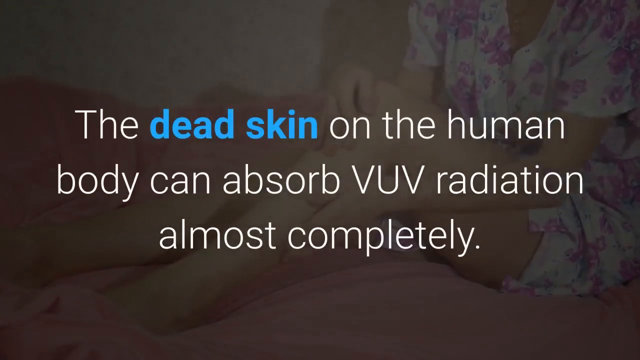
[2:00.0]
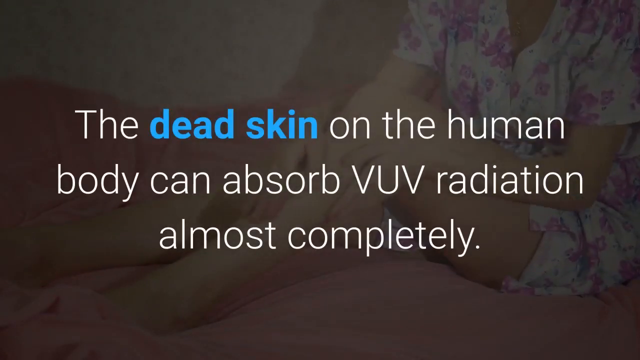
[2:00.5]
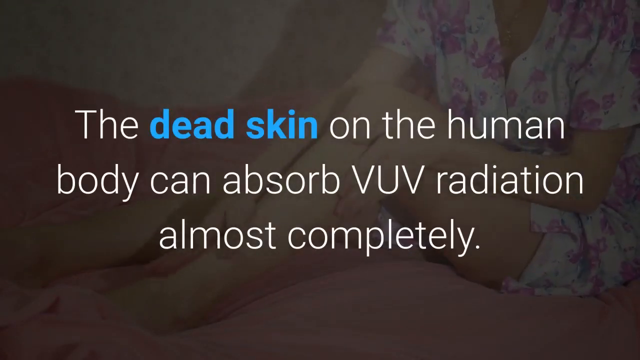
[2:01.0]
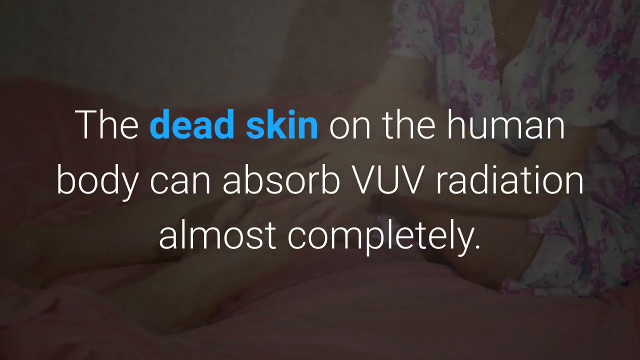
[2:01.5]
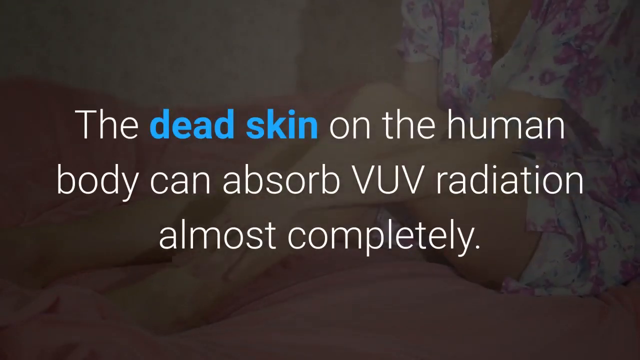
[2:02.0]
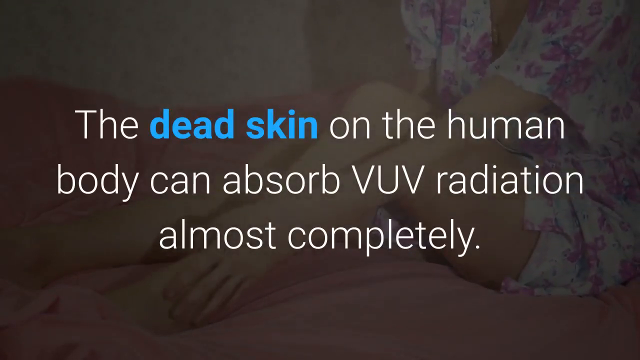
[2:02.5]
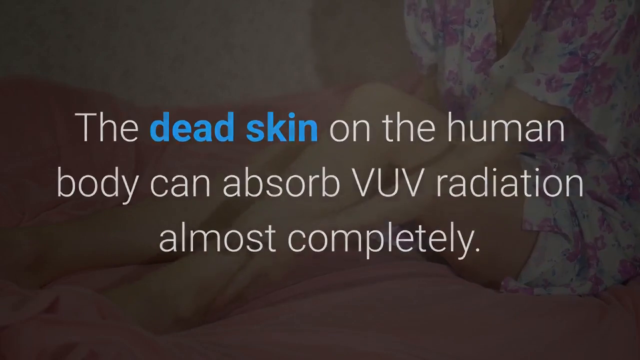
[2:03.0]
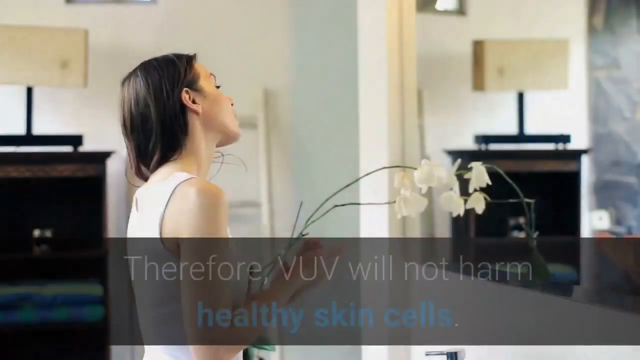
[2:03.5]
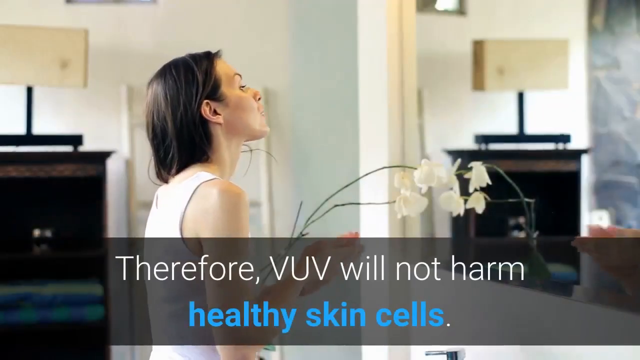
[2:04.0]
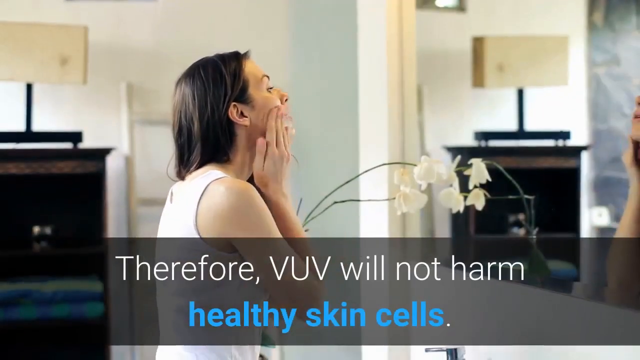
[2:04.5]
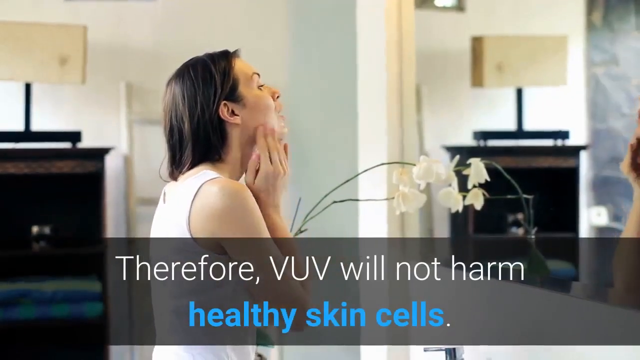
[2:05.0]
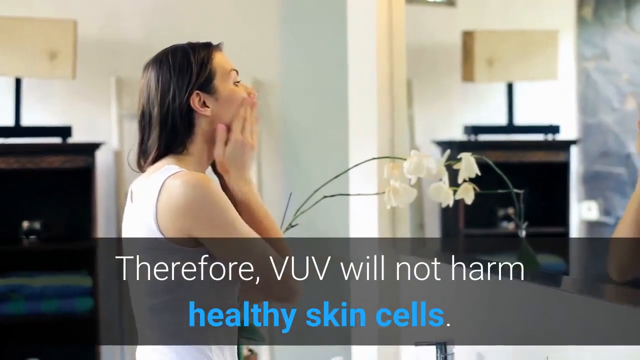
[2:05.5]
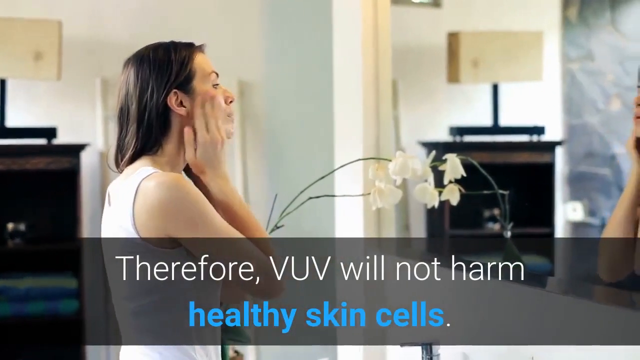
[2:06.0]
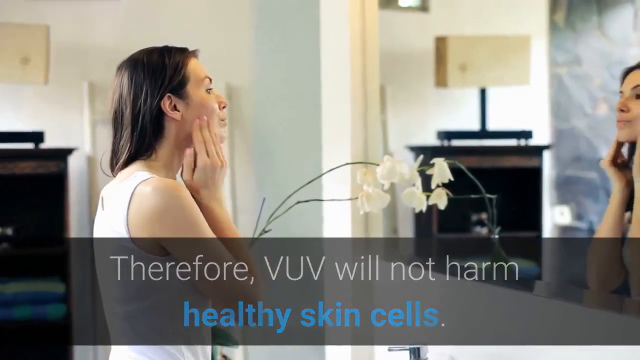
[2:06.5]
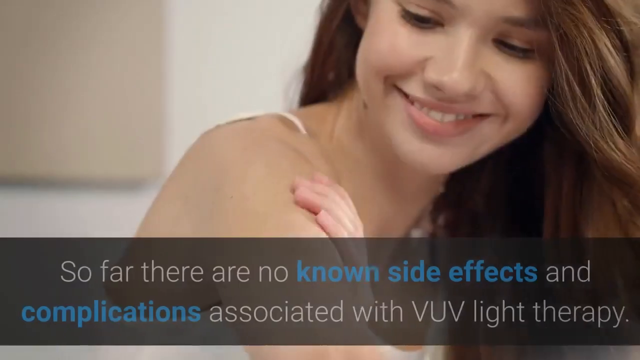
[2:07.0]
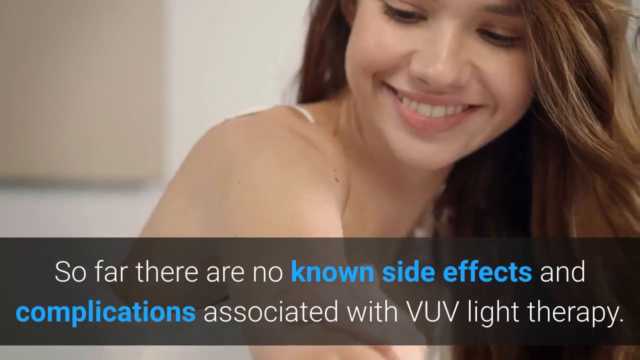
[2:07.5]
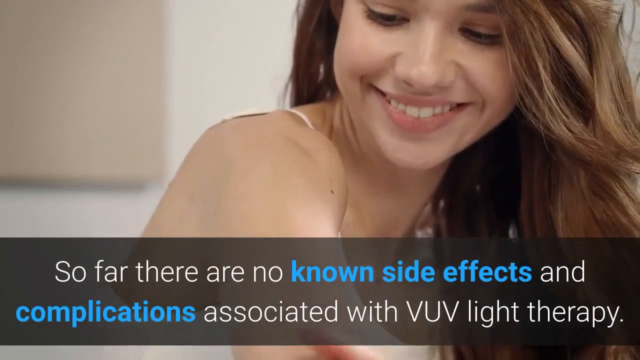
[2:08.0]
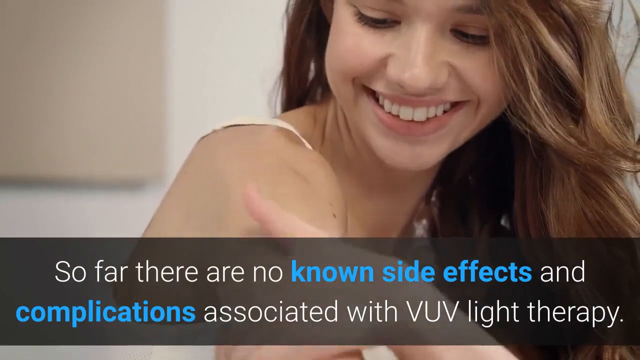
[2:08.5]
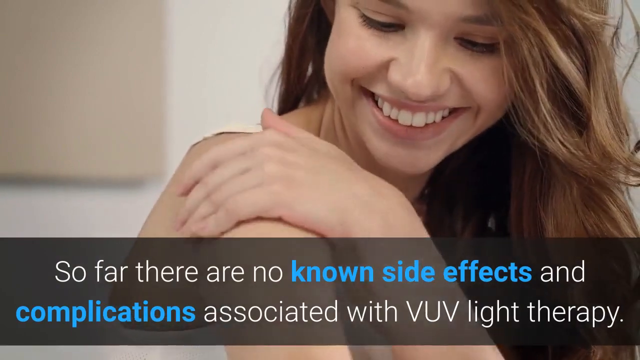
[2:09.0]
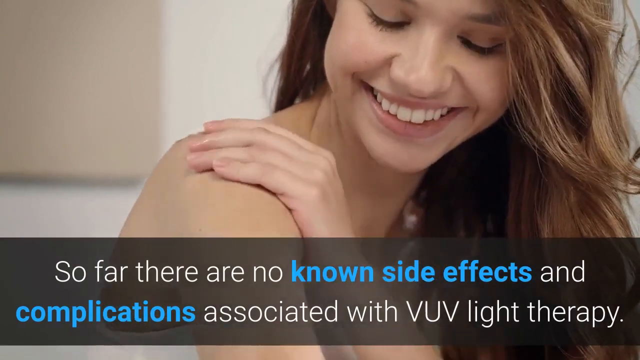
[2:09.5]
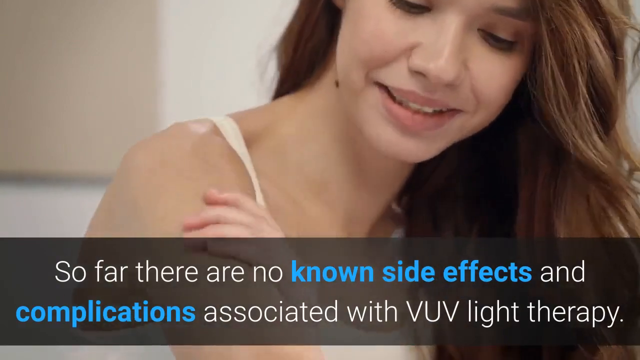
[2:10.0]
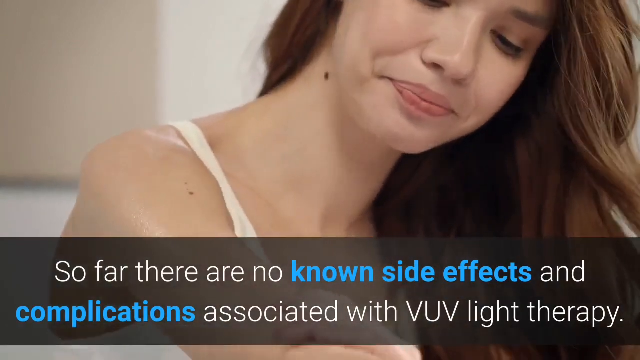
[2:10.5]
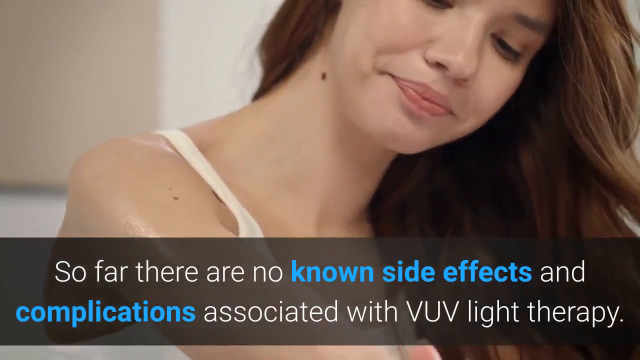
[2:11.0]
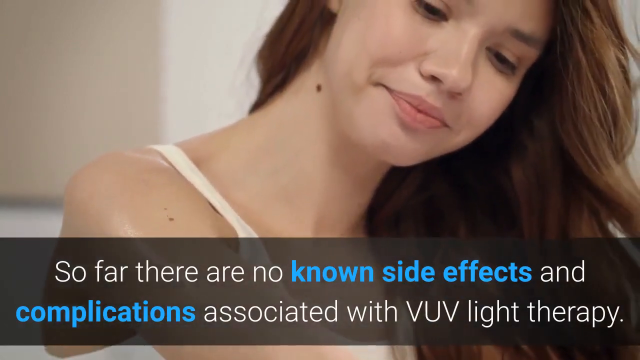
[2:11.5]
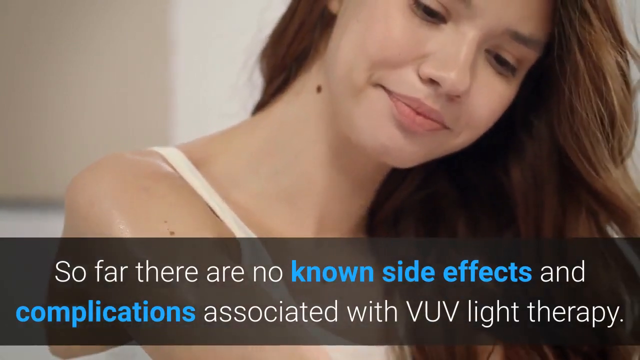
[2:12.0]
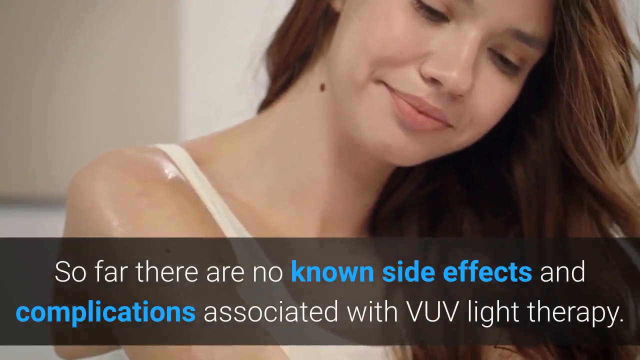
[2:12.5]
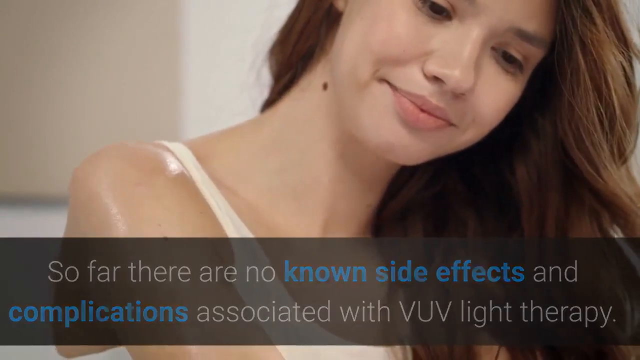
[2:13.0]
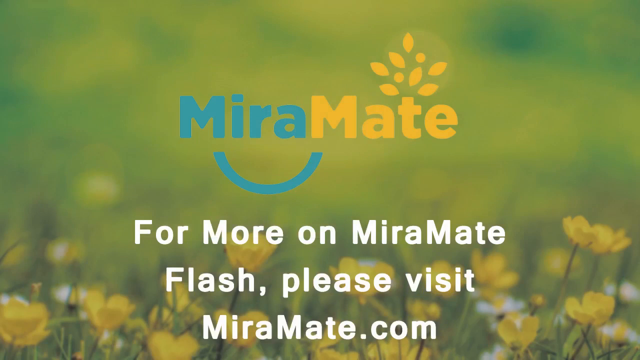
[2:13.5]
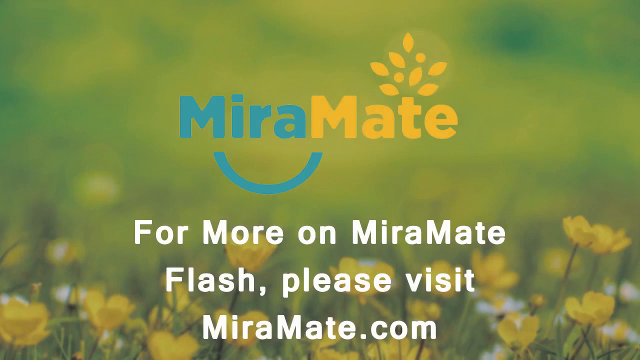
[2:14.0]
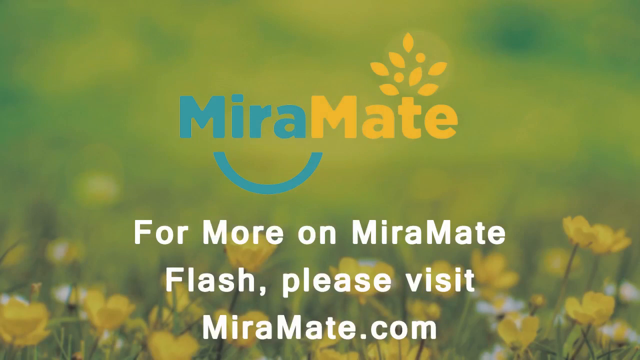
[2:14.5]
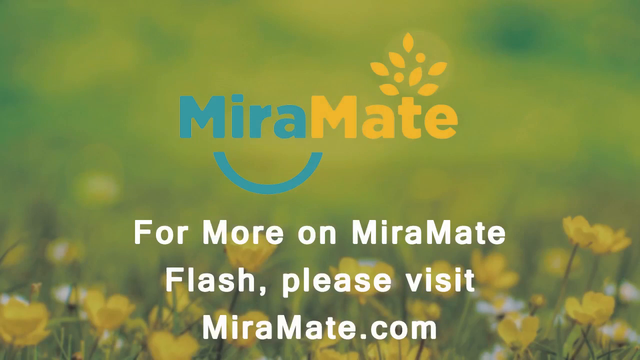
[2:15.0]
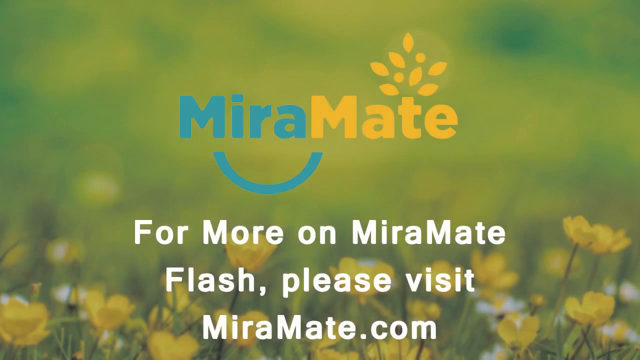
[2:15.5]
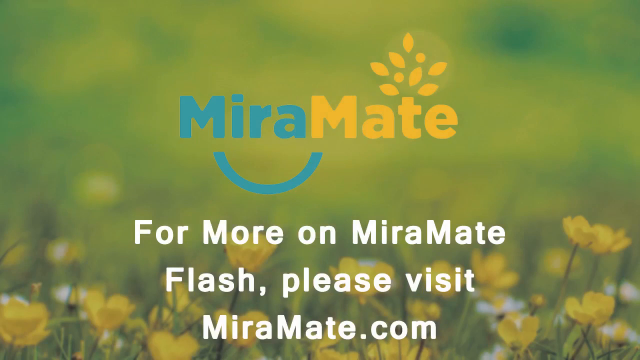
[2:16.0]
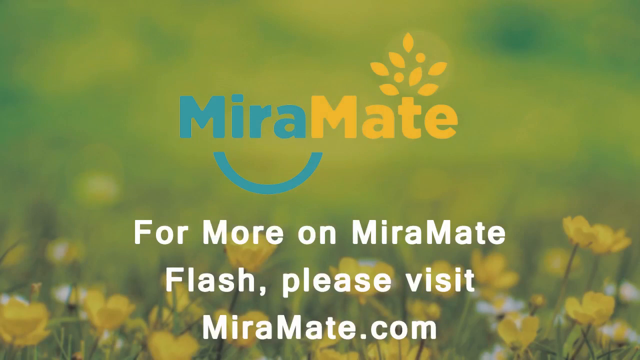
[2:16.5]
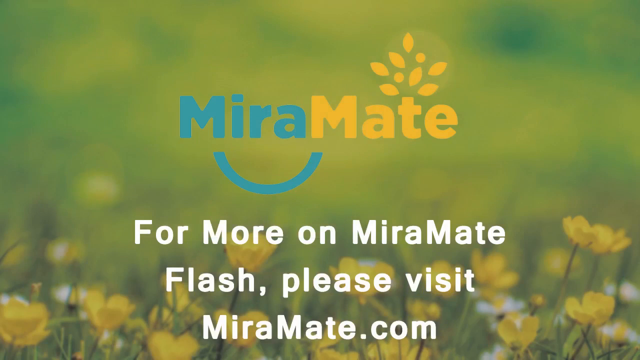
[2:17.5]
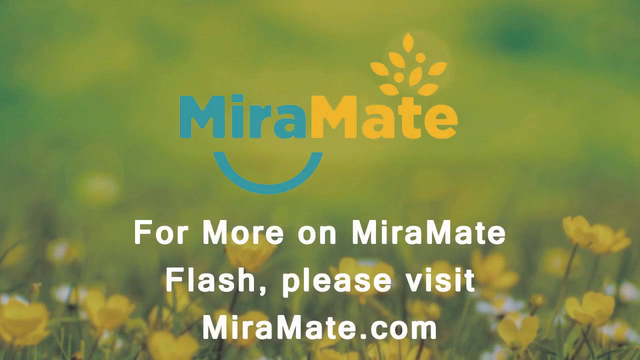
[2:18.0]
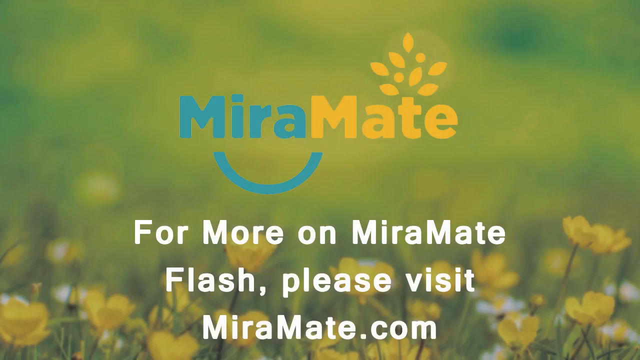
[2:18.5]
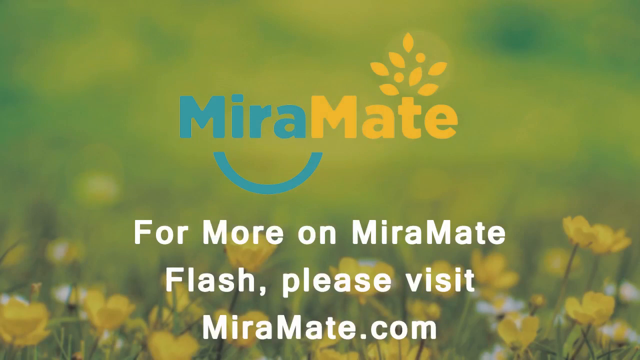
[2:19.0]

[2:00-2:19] In the background is a woman's body from her ankles to her neck. She sits on what appears to be a pink blanket, wearing white pajamas, a short-sleeve button-down top and shorts covered in purple flowers. She is Caucasian. Seated with her knees near her waist, she has both hands on her left leg, the right hand near the knee and the left hand on the calf, and rubs down her shin and calf with both hands. The text at the bottom reads "the dead skin on the human body can absorb VUV radiation almost completely", with "dead skin" in blue and the rest in white. The next scene shows a woman on the left in front of a mirror on the right. The counter or table in front of her has a white flower on it, and the text at the bottom says "therefore VUV will not harm healthy skin cells." The right side of her face is toward the camera as she looks at the mirror; she has brown hair and rubs her cheeks with her hands in a counterclockwise circular motion. Next, a smiling woman has her right shoulder toward the camera and faces and looks at that shoulder. She is Caucasian, has long dark hair and wears a white tank top, and rubs her right shoulder and upper arm with her left hand in a counterclockwise circular motion, moving up to the shoulder and back down. The text at the bottom reads "so far there are no known side effects and complications associated with VUV light therapy", with "known side effects" and "complications" in blue and the rest in white. The final screen is still: a green background with yellow and white flowers at the bottom. The text on top reads "Myra Mate", with "Myra" in blue and "Mate" in yellow, and white text at the bottom says "for more on Myra Mate flash please visit MyraMate.com".